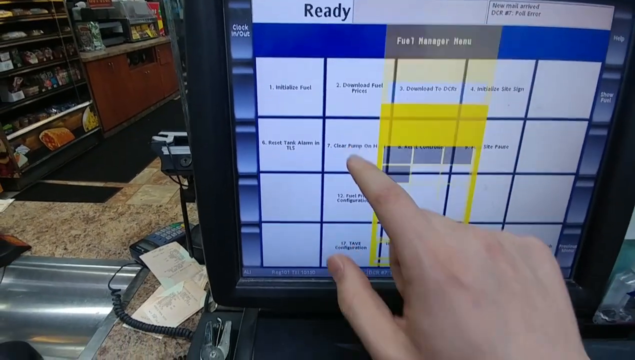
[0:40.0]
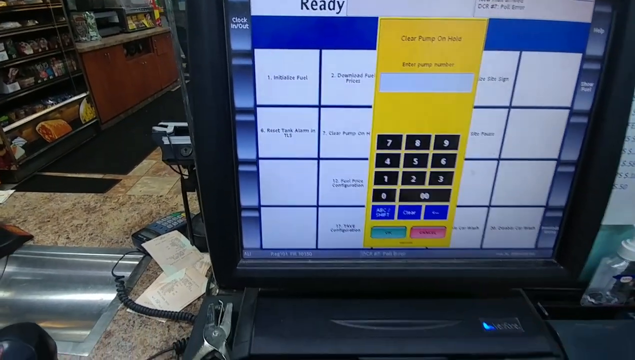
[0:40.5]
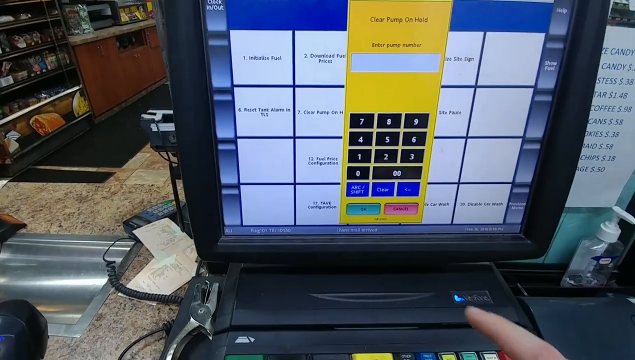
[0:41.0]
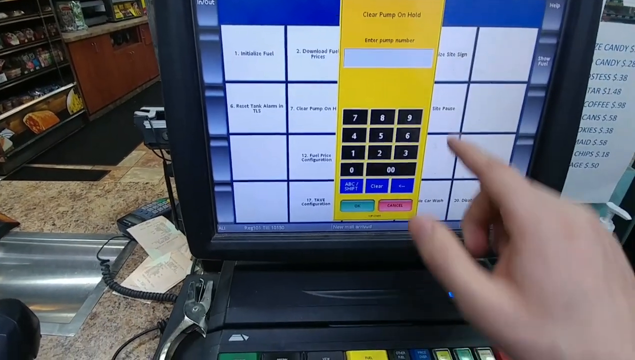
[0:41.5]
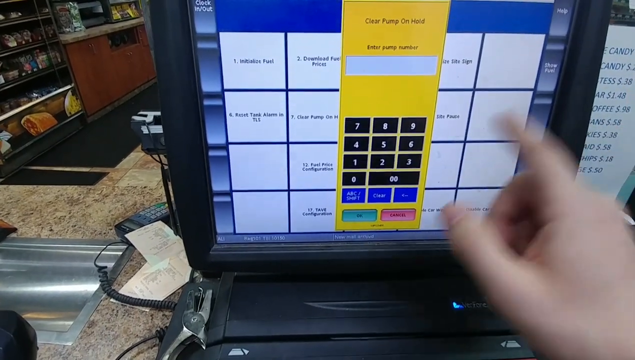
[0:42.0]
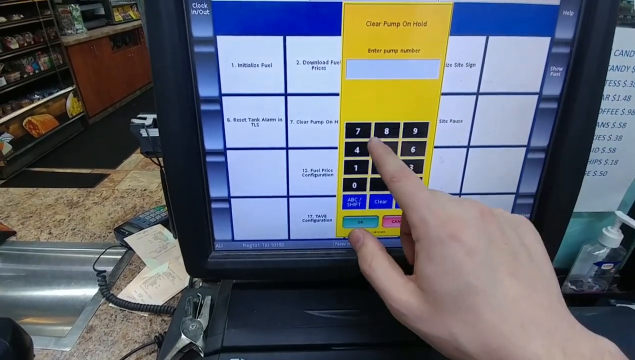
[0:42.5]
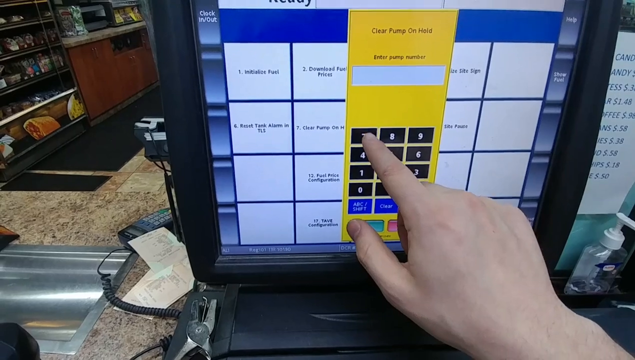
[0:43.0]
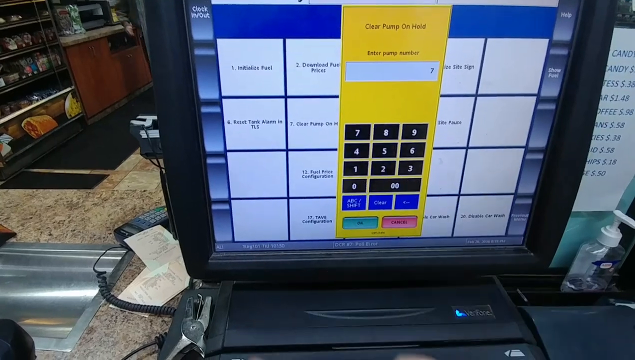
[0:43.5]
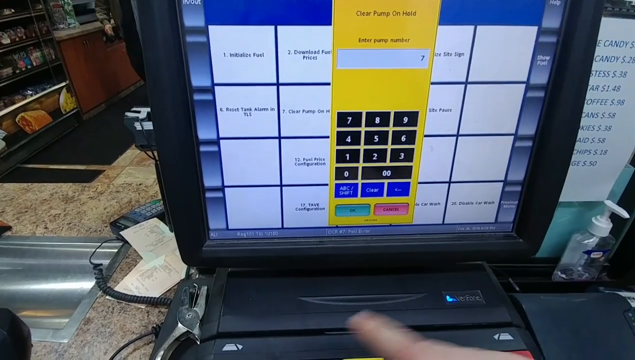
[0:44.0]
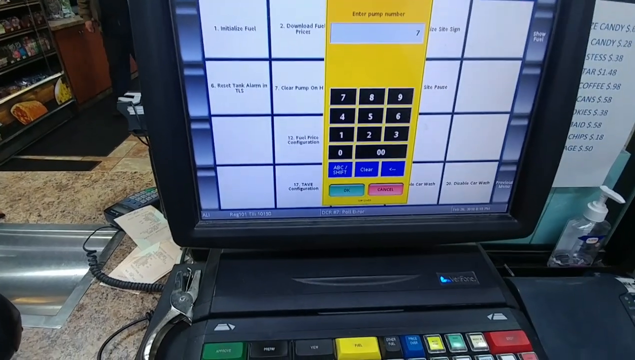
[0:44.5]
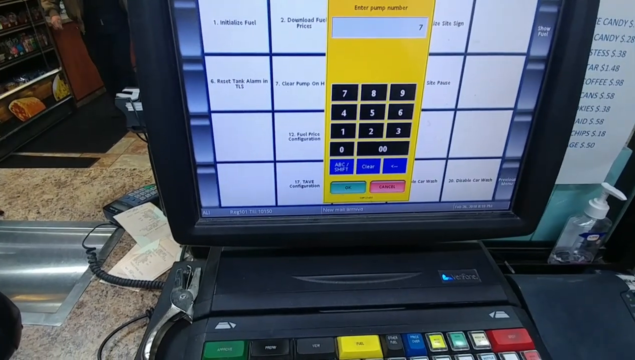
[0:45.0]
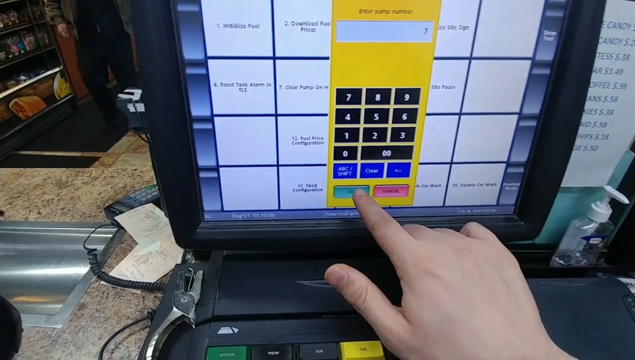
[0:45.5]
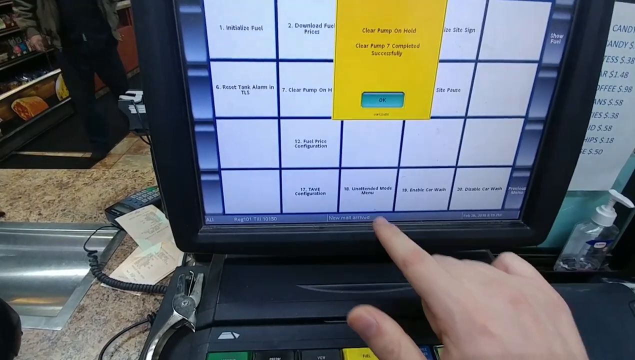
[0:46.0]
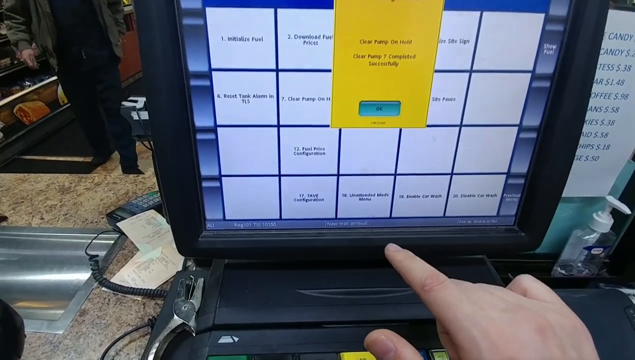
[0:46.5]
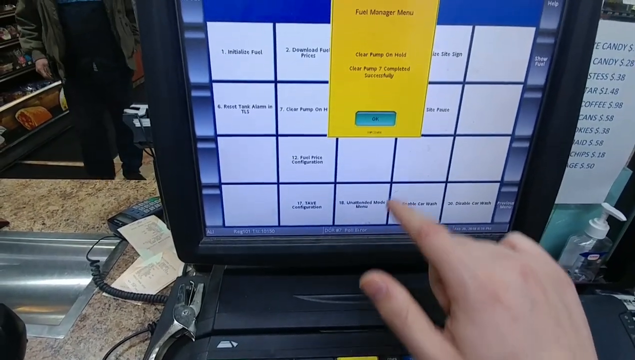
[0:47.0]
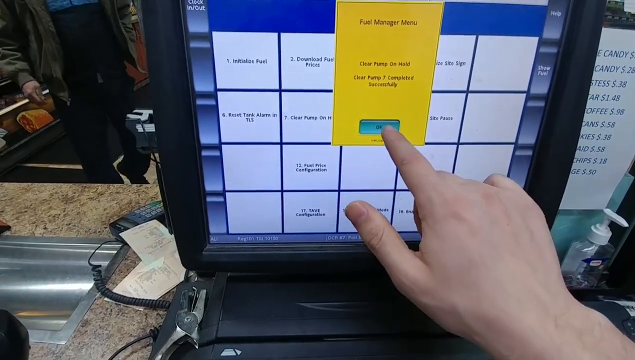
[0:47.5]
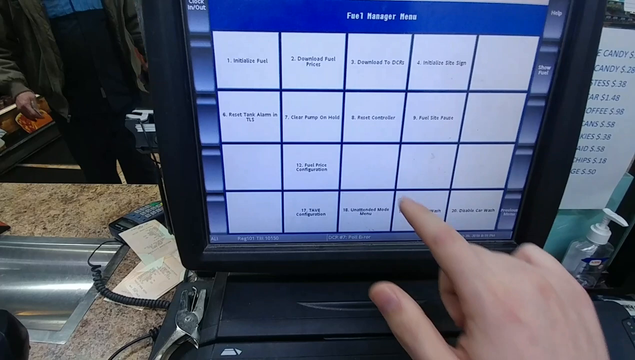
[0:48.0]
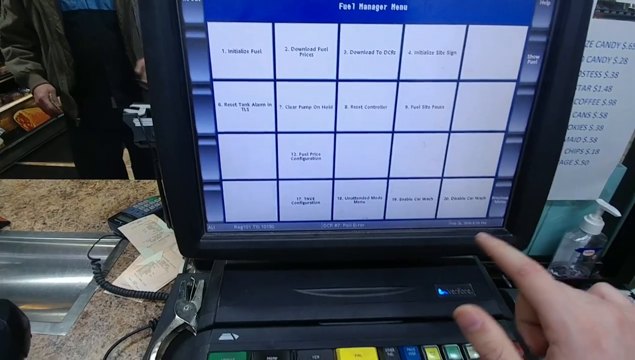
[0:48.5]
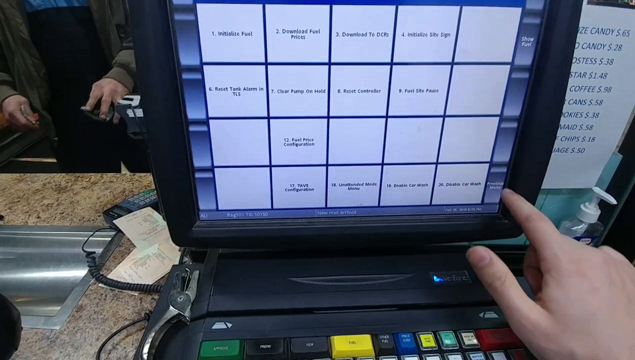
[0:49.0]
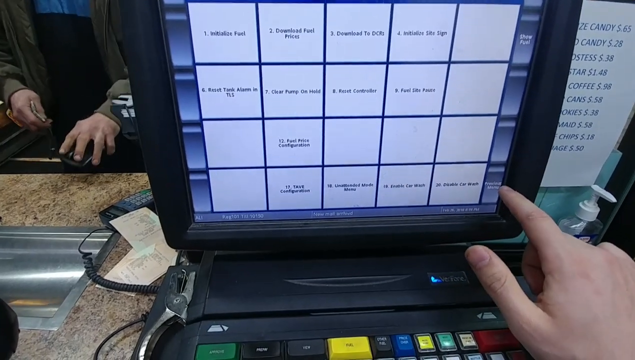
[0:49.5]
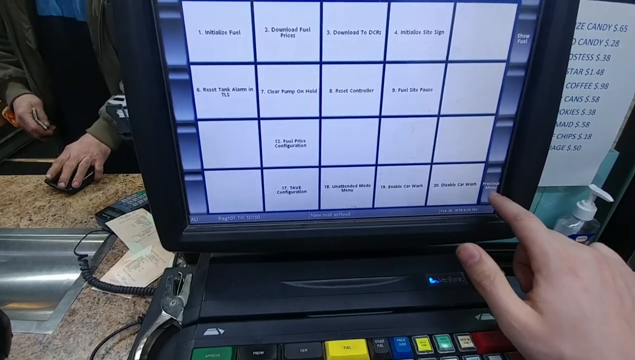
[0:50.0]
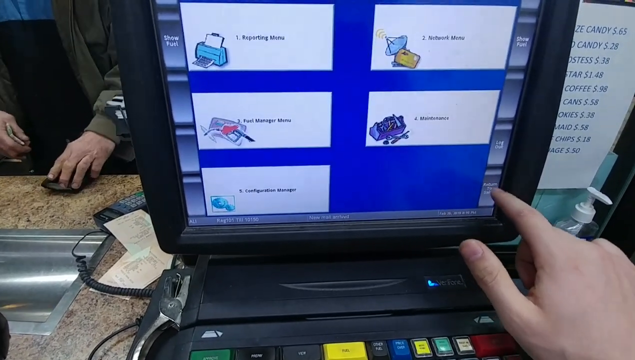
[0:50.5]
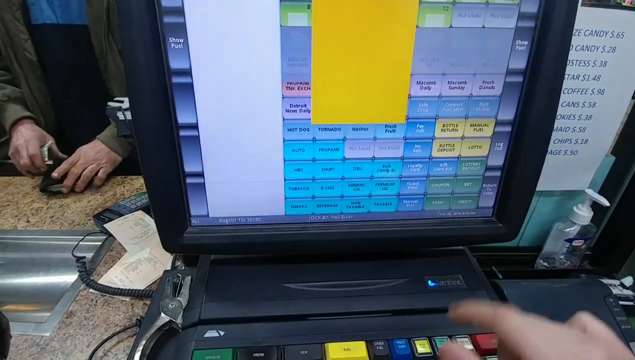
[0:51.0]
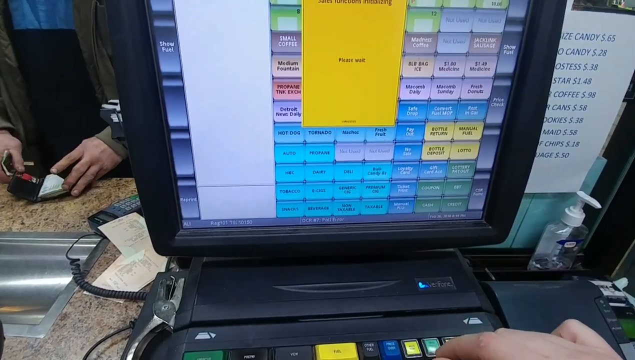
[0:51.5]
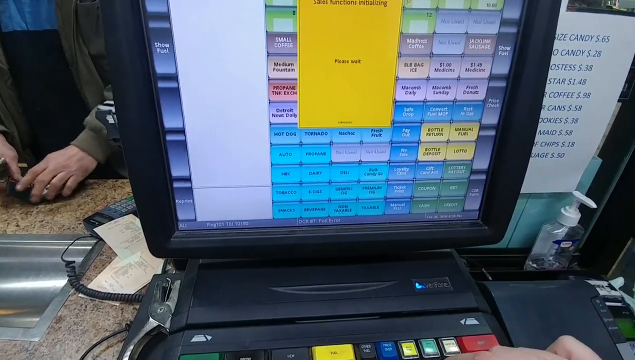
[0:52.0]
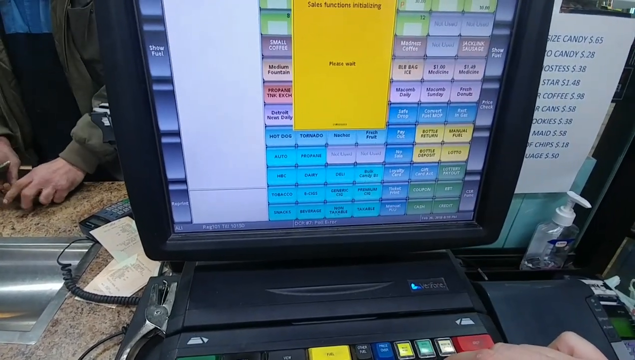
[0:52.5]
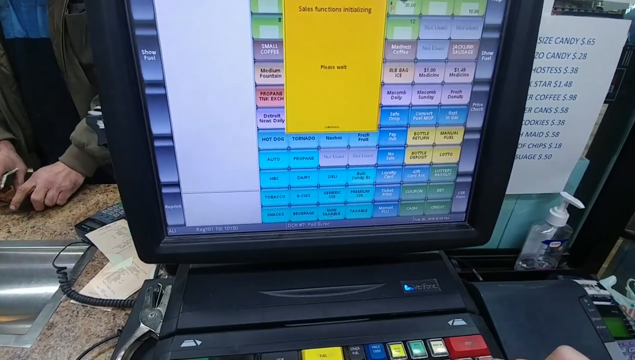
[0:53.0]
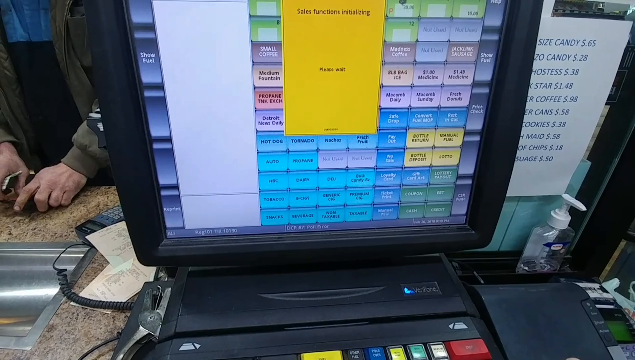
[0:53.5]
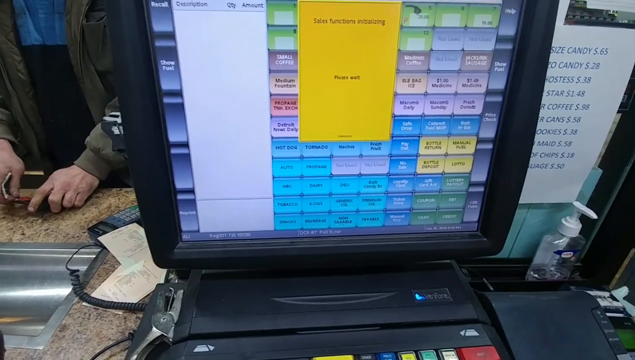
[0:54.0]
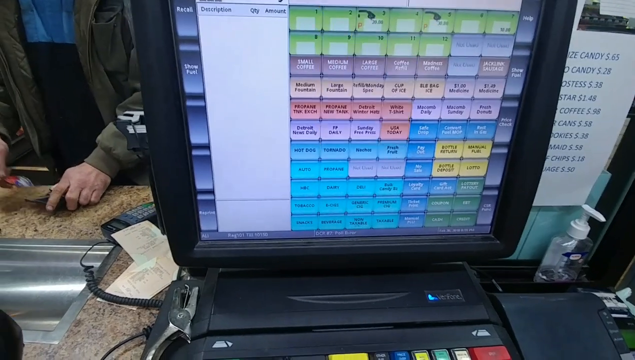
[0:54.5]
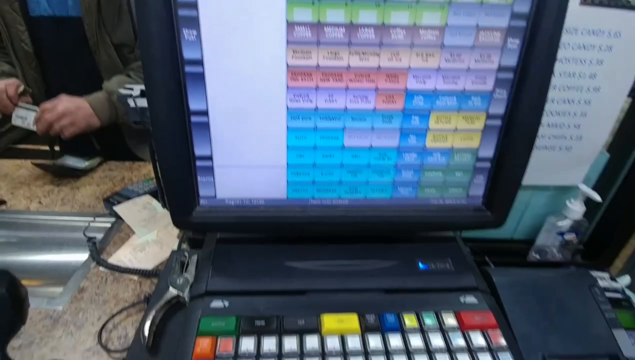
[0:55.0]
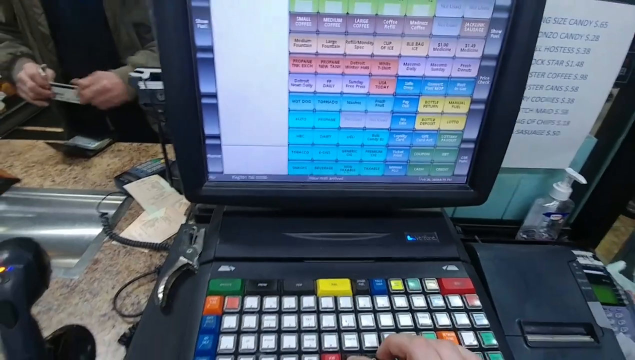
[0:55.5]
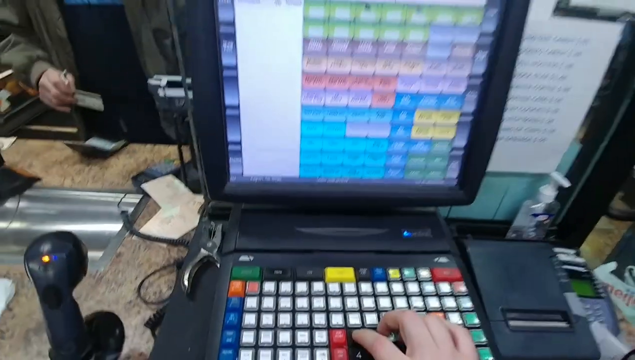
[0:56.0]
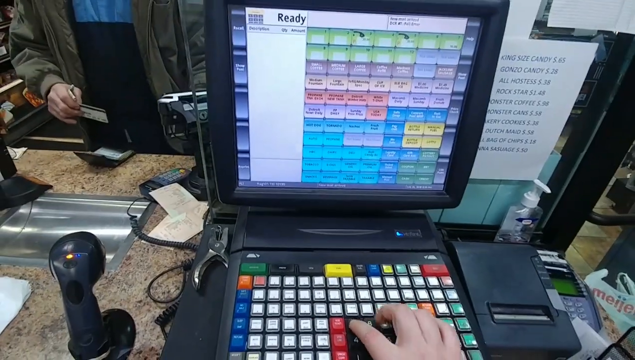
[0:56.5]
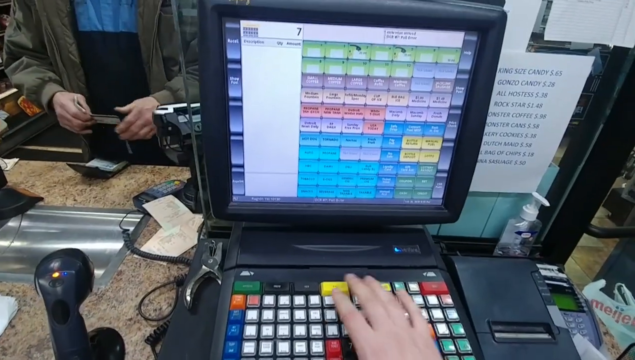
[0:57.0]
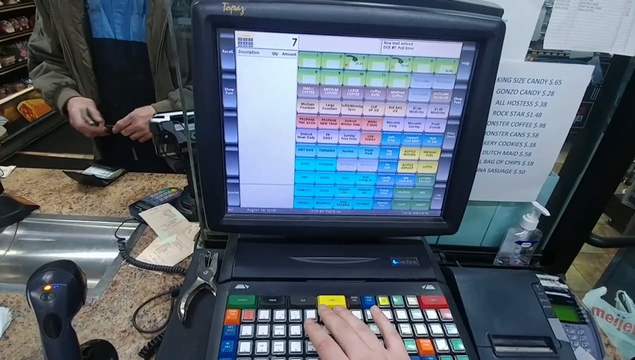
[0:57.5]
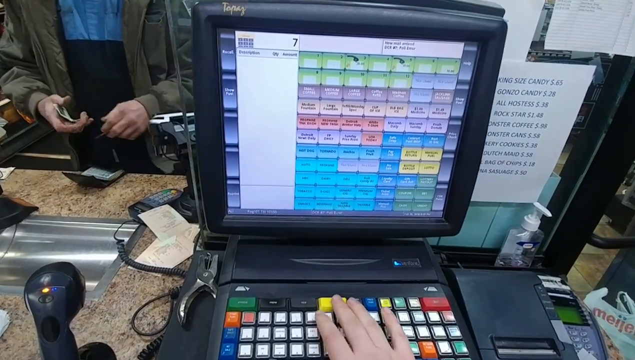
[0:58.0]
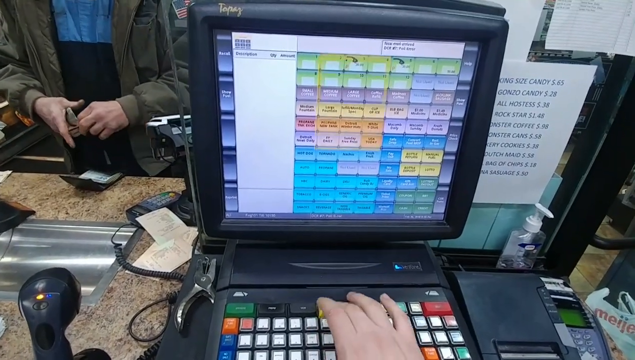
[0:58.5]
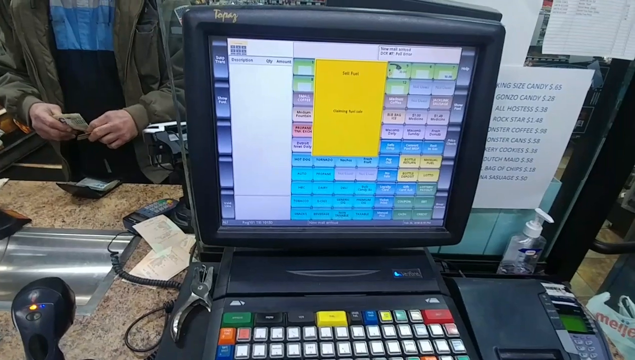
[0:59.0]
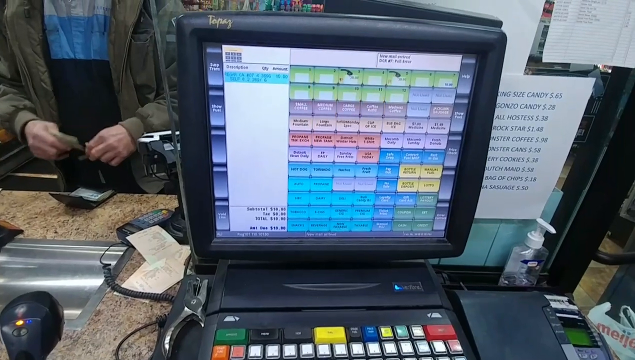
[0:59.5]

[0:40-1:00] The person's hand, the only part of them visible, uses a finger to select on the calculator-type screen. The screen says "enter pump number"; they select pump number seven and press okay. A message comes up reading "fuel manager menu, clear pump on hold, clear pump seven, completed successfully" with an okay button, and they click okay. To the left of the screen, somebody comes over and puts something on the counter, apparently ready to check out. The cashier is still working on the screen and looks like they are going to click previous menu. The screen then says "sales function initializing". The cashier presses some buttons on the register keyboard, and a message pops up saying "sell fuel, claiming fuel sale". Hand sanitizer is on the right, along with the printed paper of common items. A few products are on a shelf to the left in the distance, and a payment computer chip where someone would enter a credit card is on the counter.